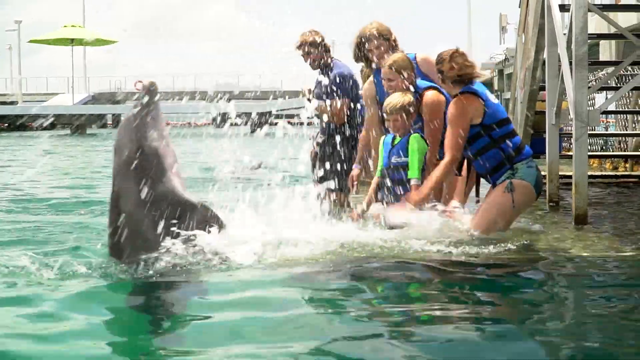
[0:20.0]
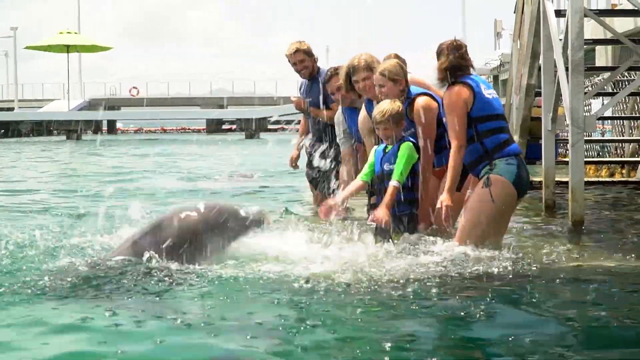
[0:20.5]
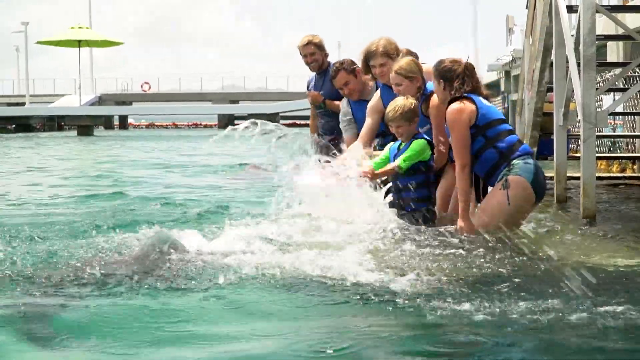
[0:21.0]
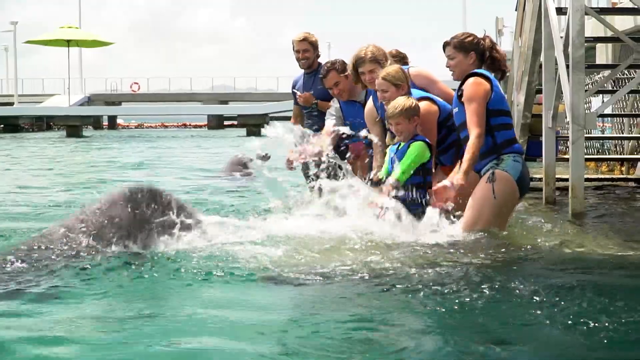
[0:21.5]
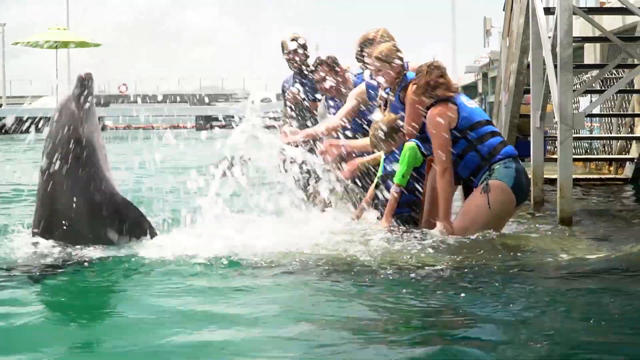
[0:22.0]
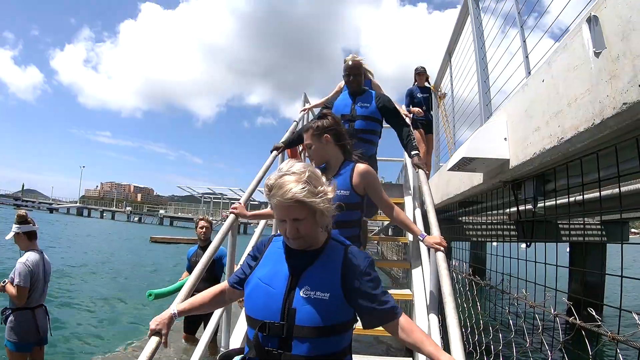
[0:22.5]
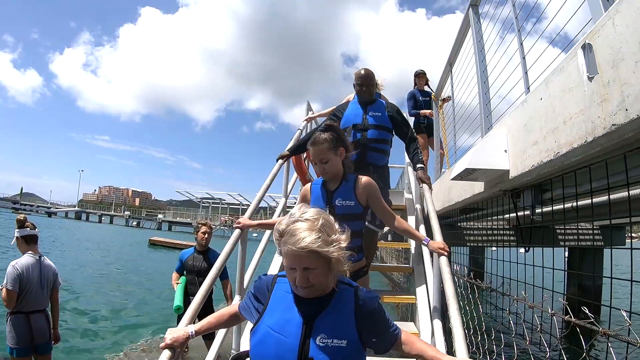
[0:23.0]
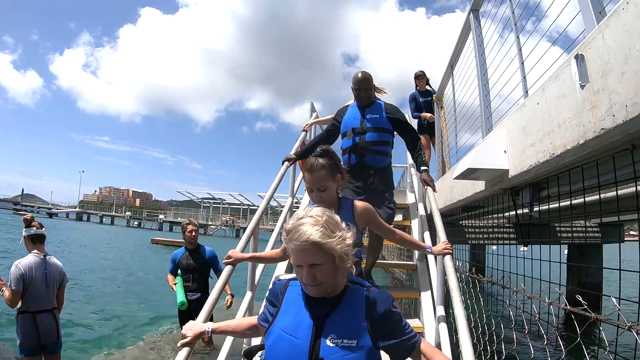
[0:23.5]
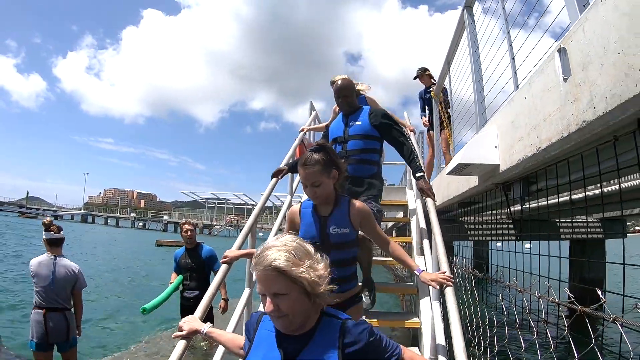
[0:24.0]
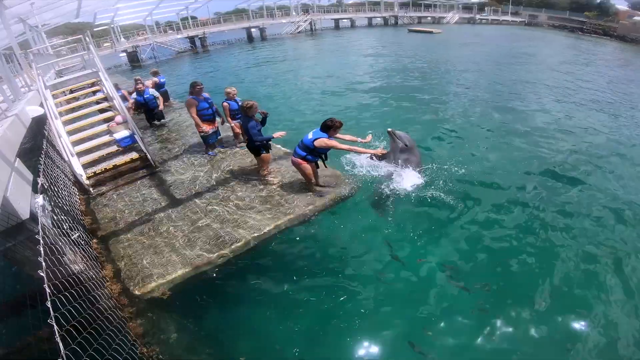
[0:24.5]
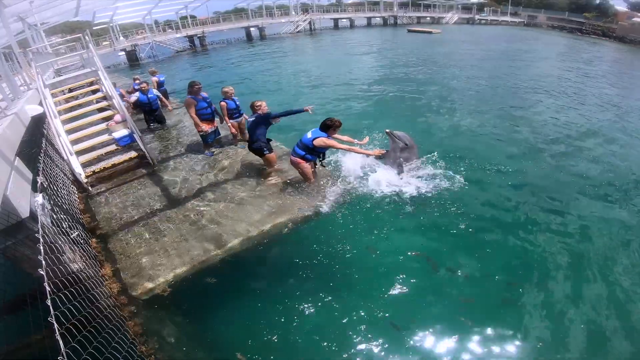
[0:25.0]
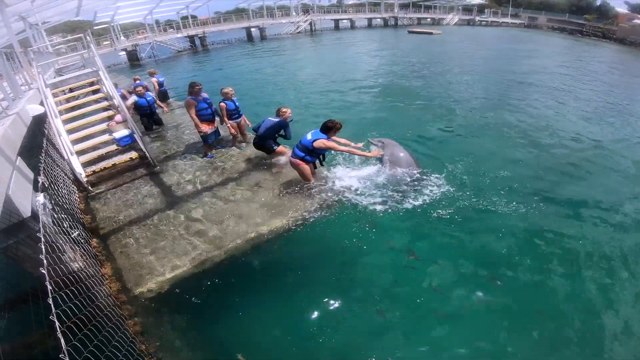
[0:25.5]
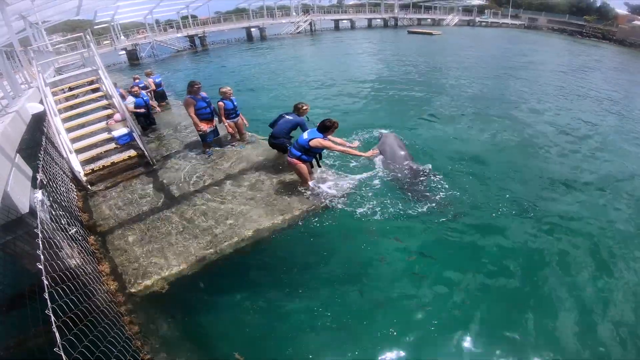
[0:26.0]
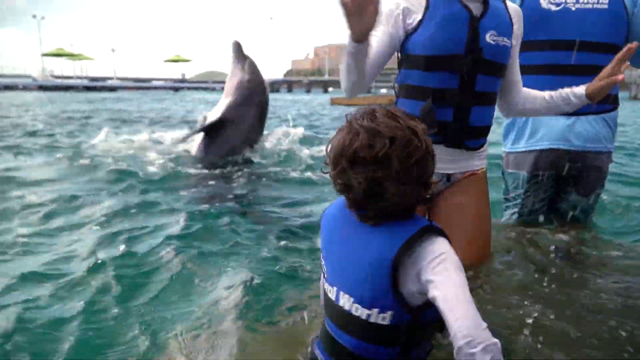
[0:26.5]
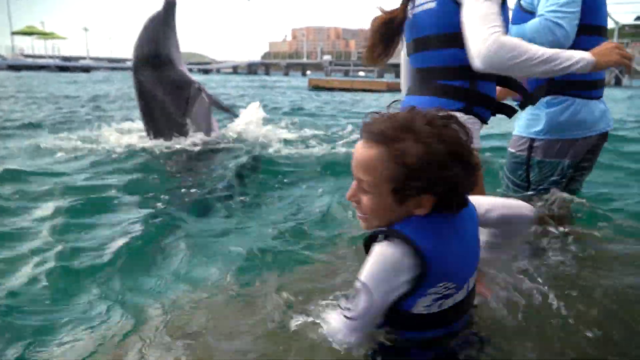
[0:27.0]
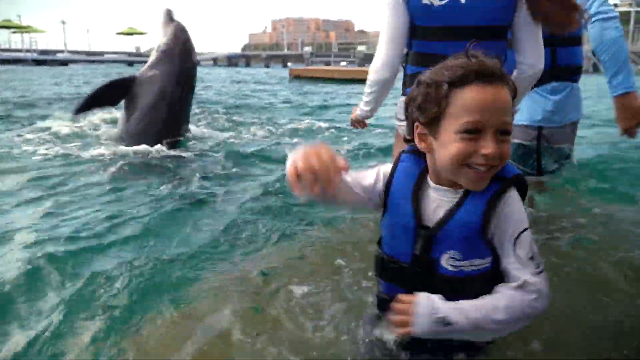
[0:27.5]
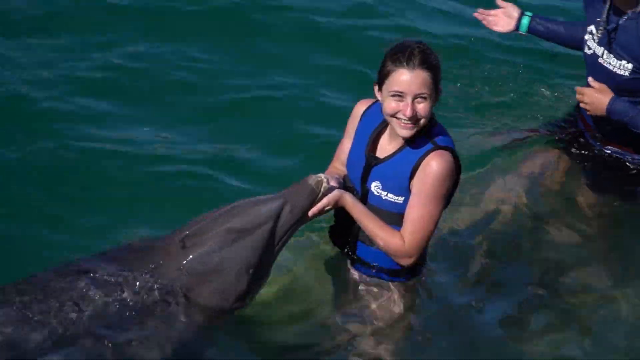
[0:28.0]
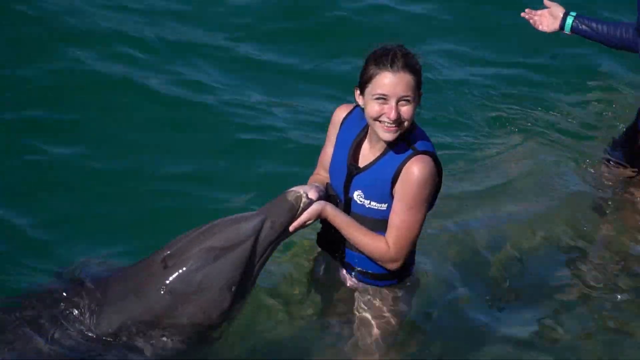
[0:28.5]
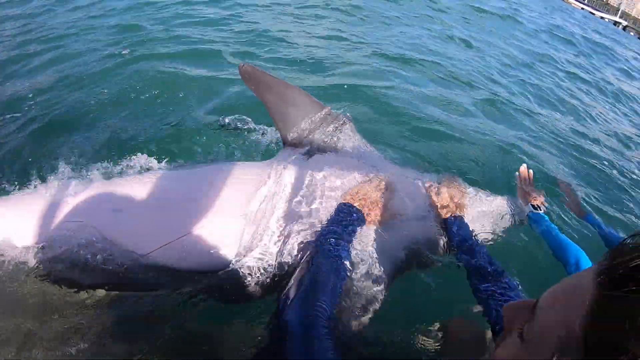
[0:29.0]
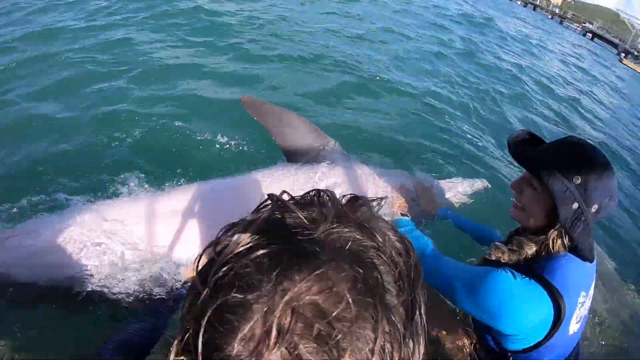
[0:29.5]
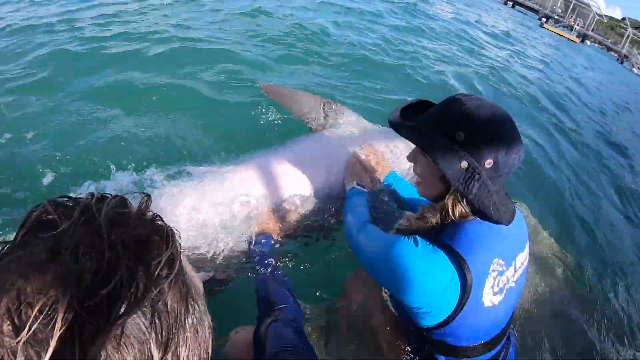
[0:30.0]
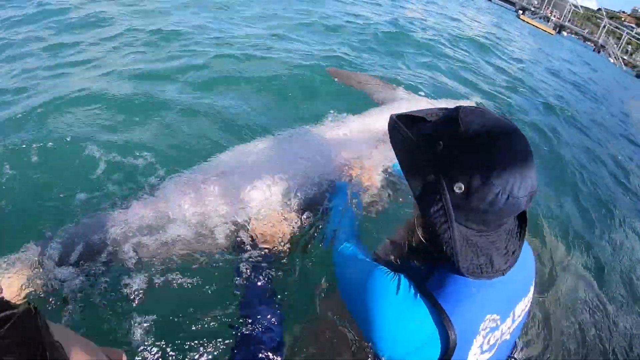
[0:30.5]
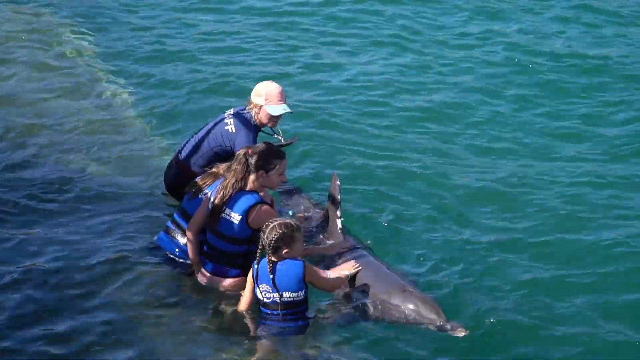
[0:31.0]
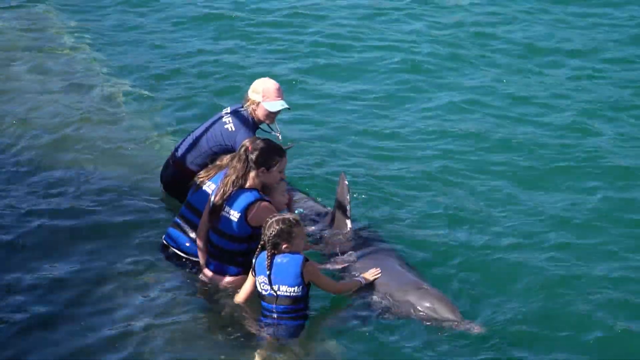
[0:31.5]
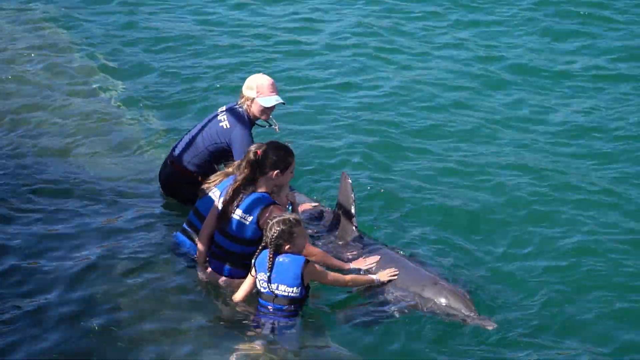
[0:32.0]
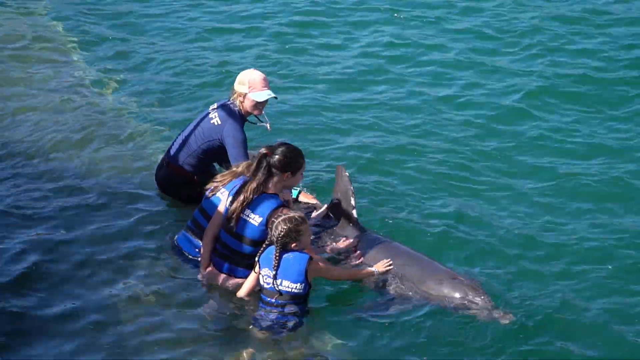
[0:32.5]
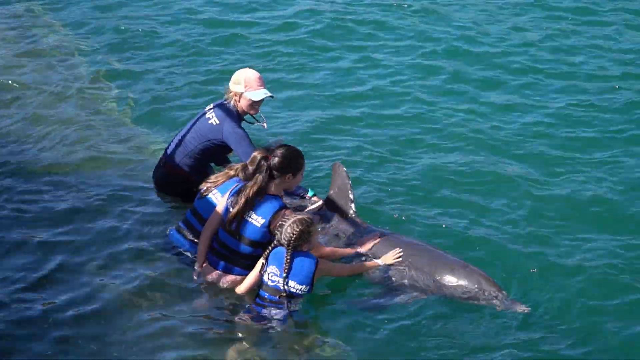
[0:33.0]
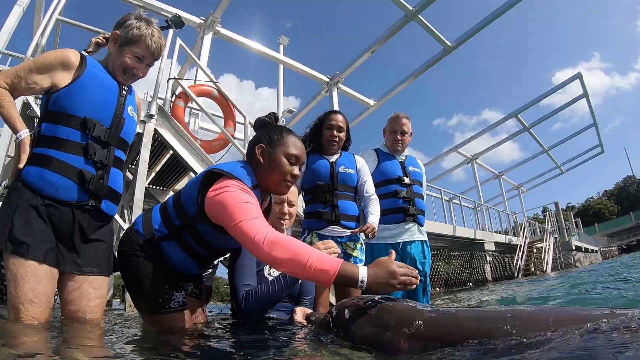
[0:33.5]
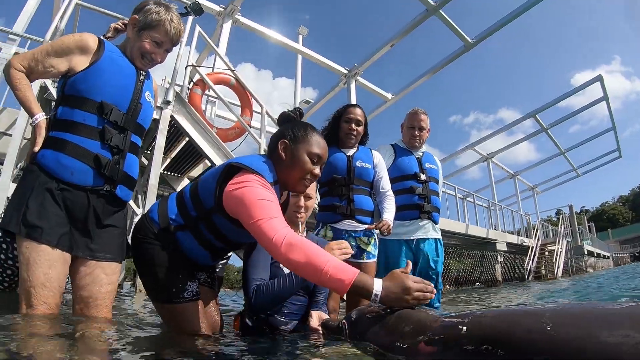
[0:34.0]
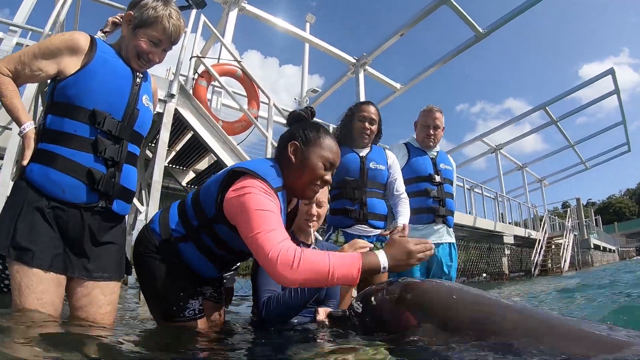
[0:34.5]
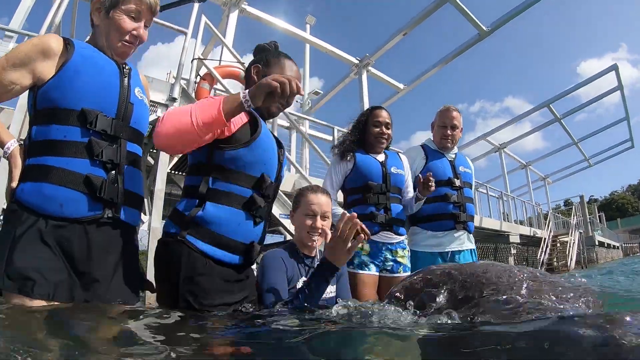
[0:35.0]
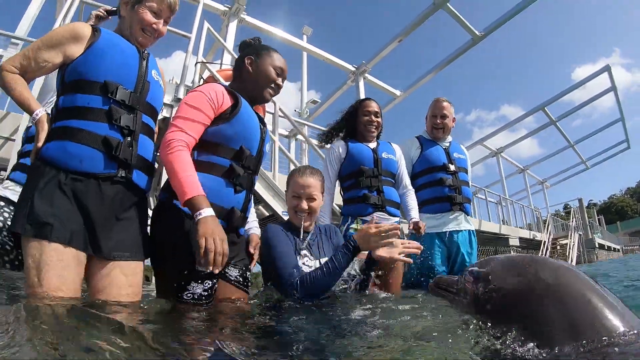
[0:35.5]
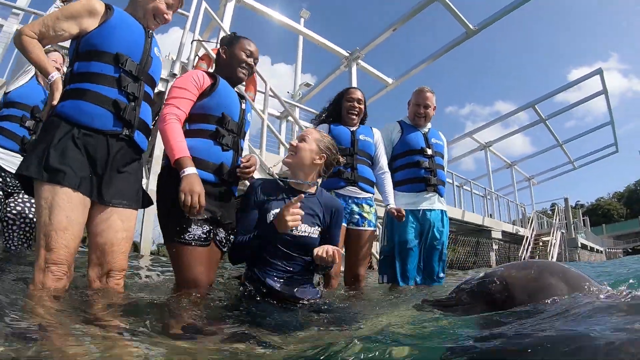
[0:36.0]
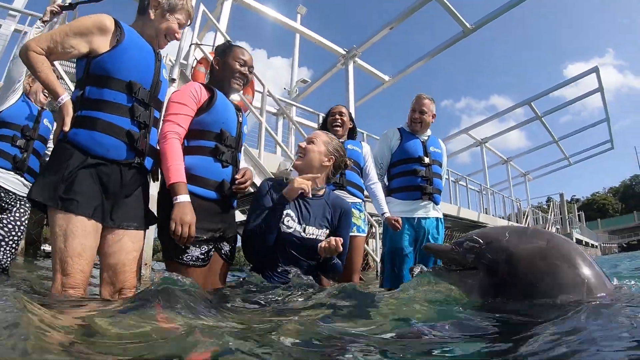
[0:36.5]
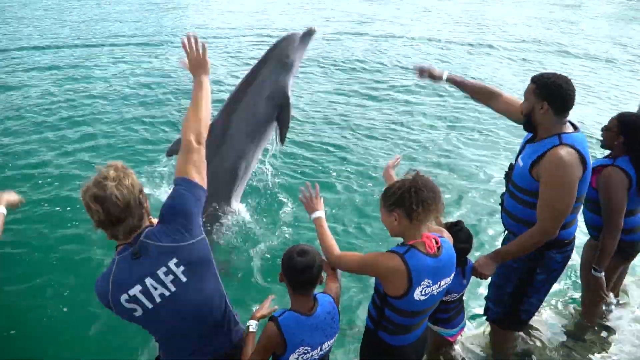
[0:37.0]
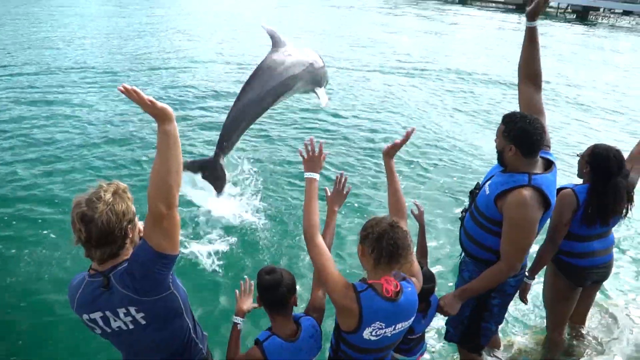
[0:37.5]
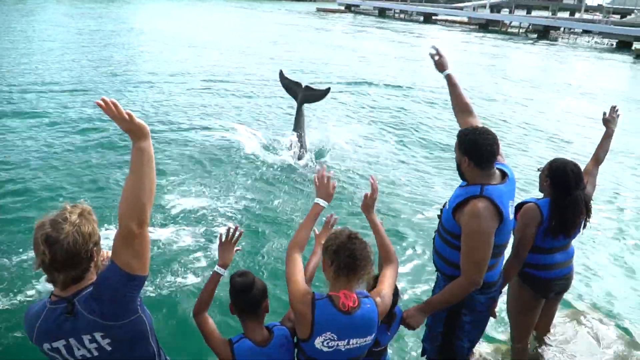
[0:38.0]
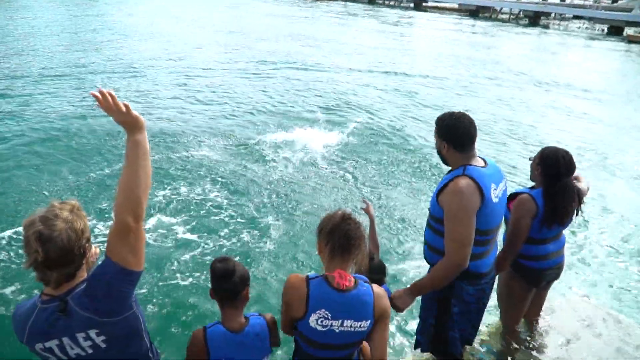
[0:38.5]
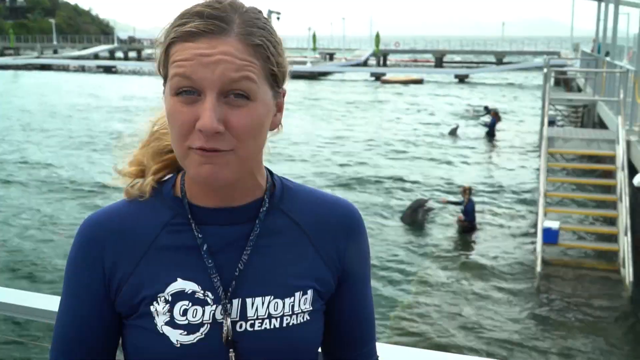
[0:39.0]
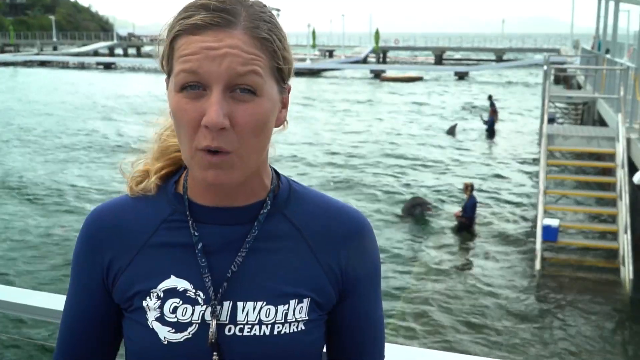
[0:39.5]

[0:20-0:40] A group of six people, five adults and a kid, splash water at a dolphin in front of them, and the dolphin plays with them, splashing more water back. Next, three people wearing safety jackets go down a staircase towards the water. Another shot shows the stairs and a platform partially submerged in the water, where the people can stand and get close to a dolphin; near the group on the platform, a dolphin splashes water. Then a kid and two adults turn in a circle around themselves while a dolphin in the water does the same movement. A young girl holds the mouth of a dolphin in her hands and smiles at the camera. In another shot, two people rub the belly of a dolphin. More people pet a dolphin in the water with the instructor. Finally, a dolphin raises itself out of the water and a group of people on the platform wave at it.